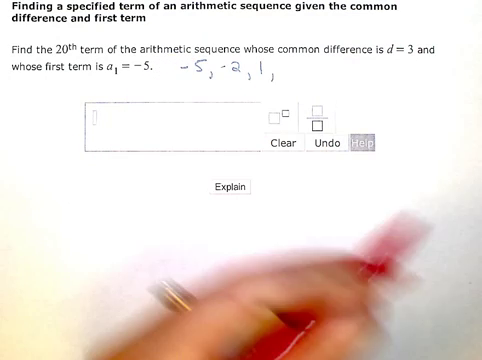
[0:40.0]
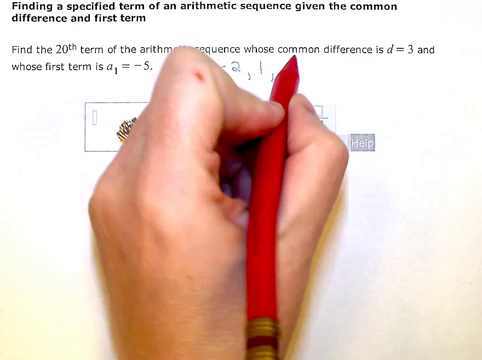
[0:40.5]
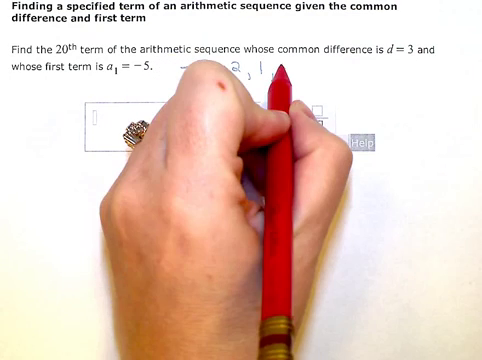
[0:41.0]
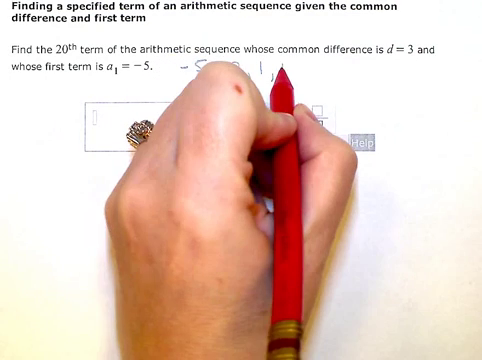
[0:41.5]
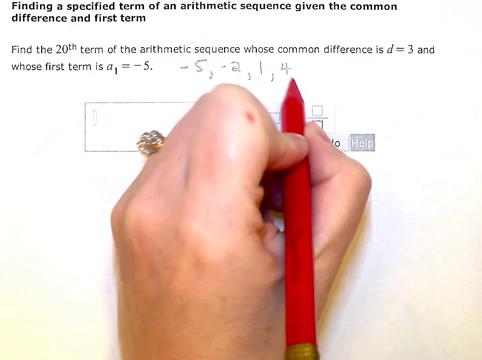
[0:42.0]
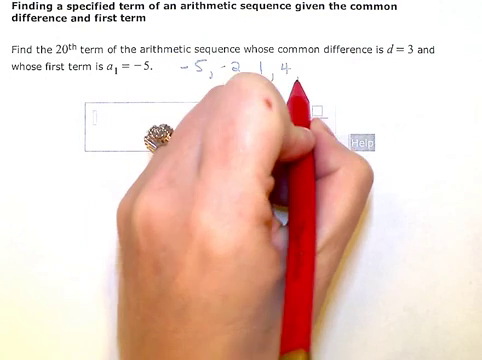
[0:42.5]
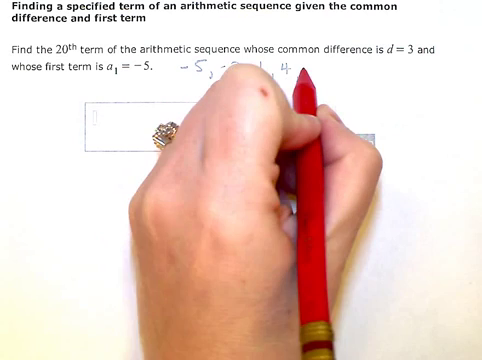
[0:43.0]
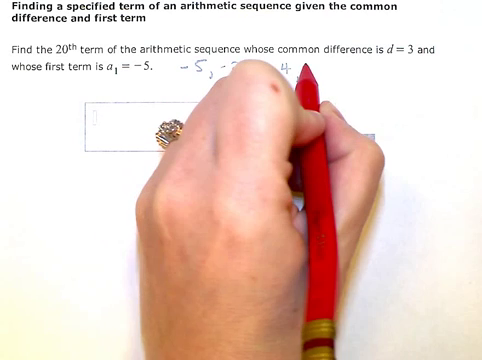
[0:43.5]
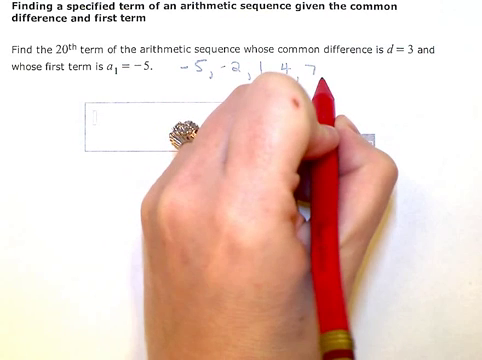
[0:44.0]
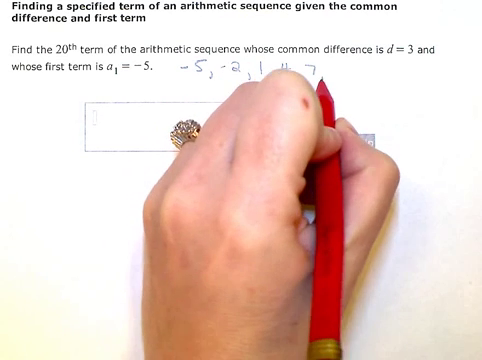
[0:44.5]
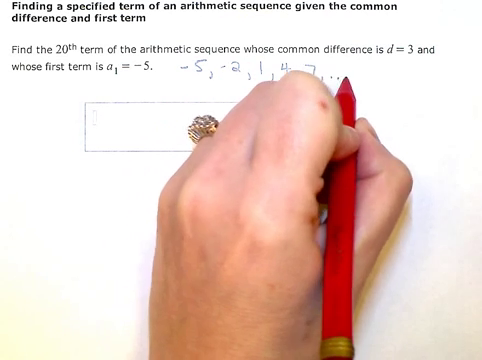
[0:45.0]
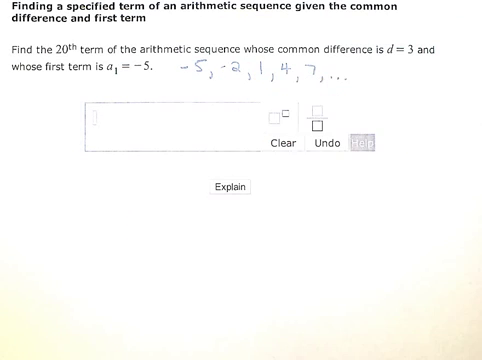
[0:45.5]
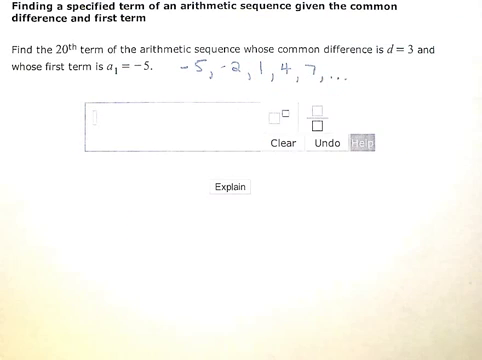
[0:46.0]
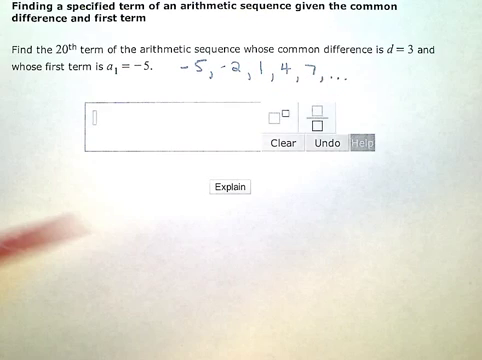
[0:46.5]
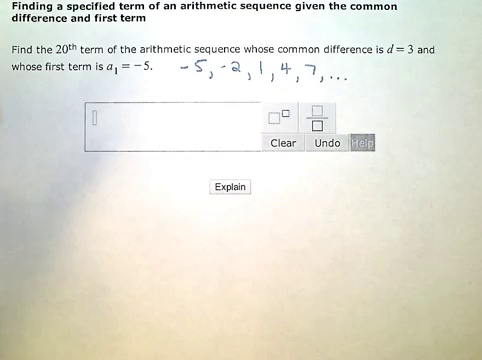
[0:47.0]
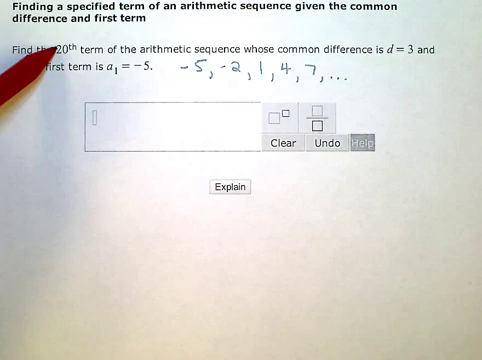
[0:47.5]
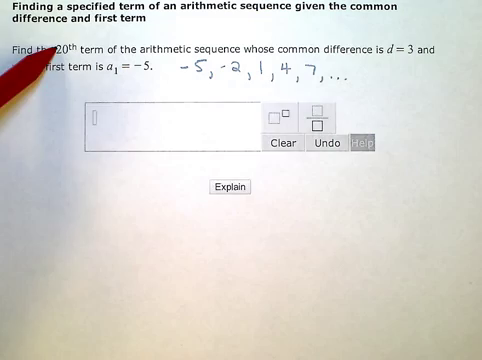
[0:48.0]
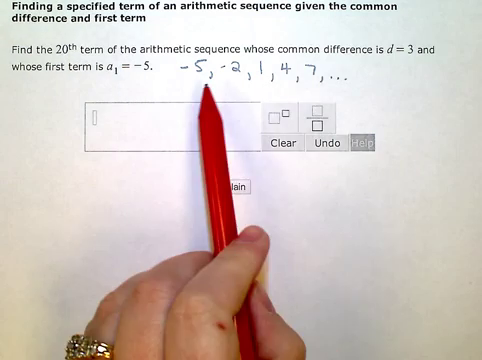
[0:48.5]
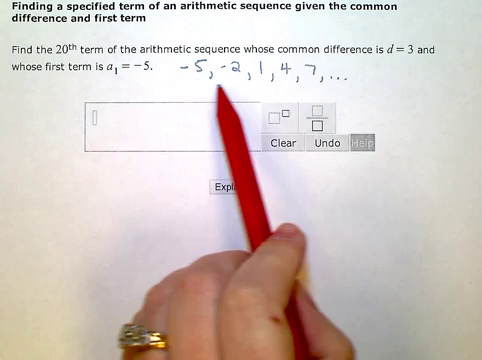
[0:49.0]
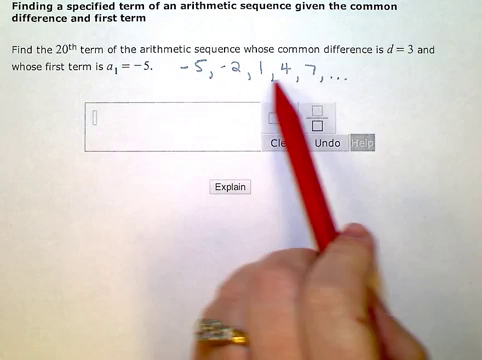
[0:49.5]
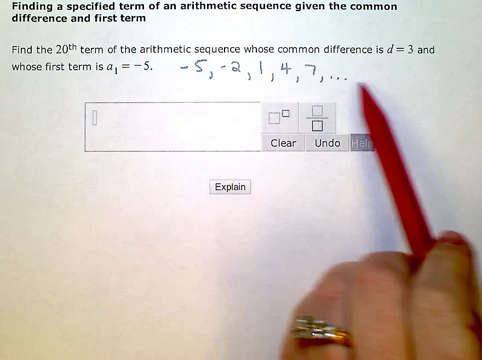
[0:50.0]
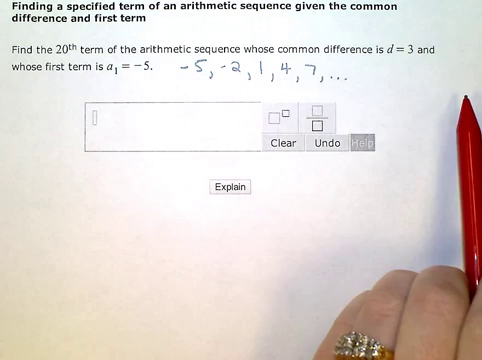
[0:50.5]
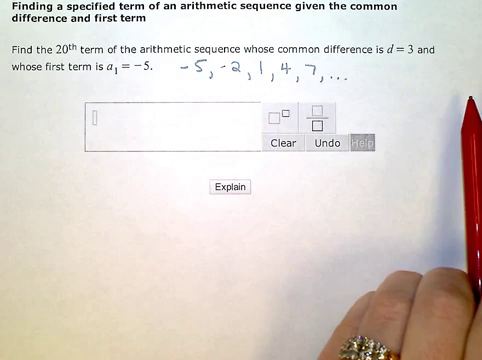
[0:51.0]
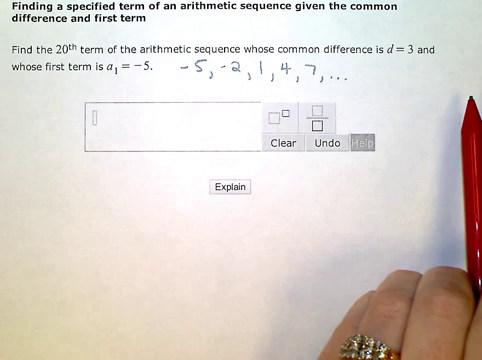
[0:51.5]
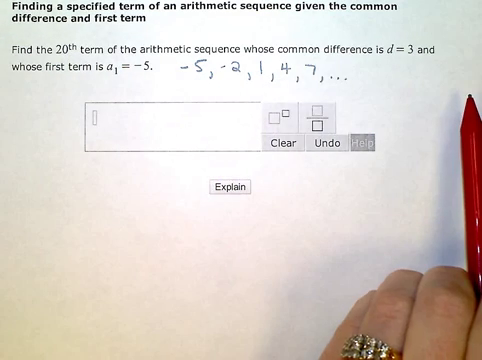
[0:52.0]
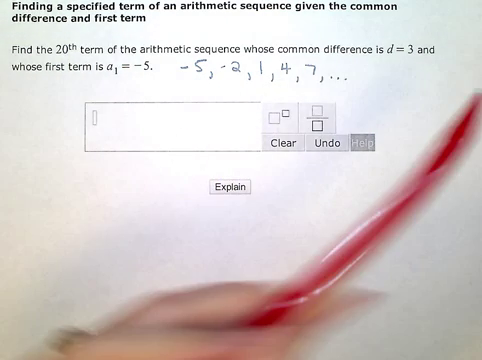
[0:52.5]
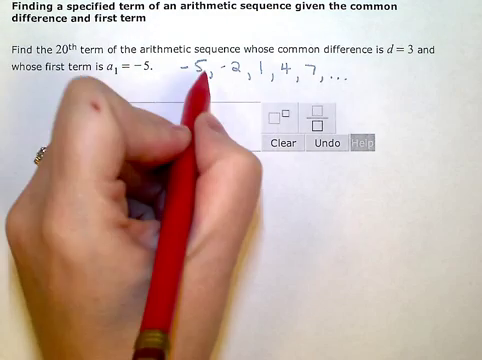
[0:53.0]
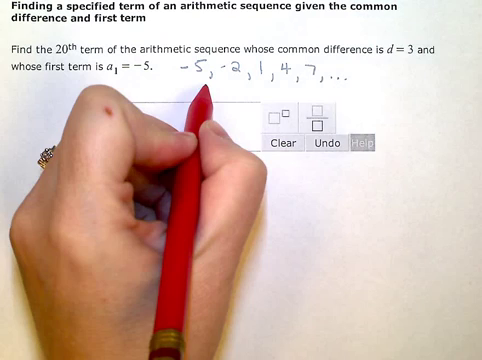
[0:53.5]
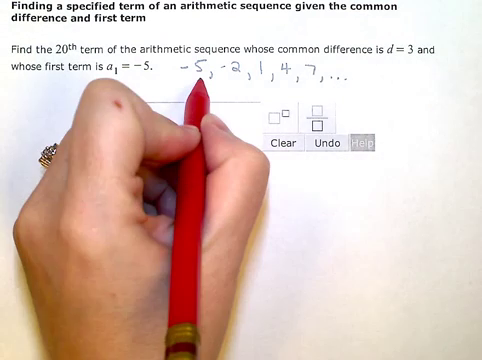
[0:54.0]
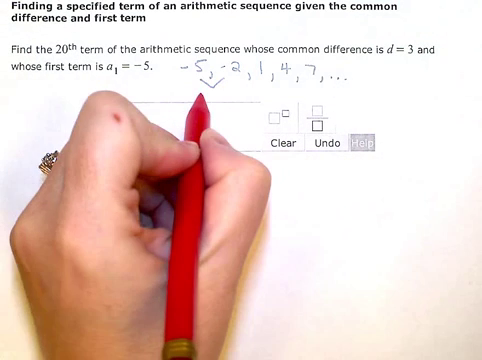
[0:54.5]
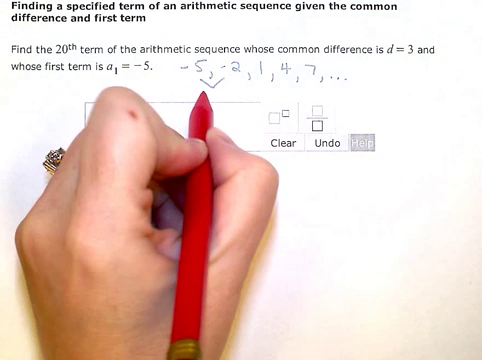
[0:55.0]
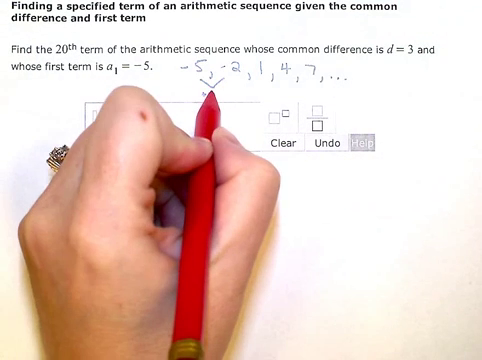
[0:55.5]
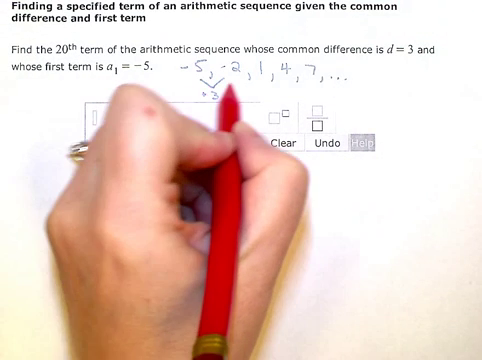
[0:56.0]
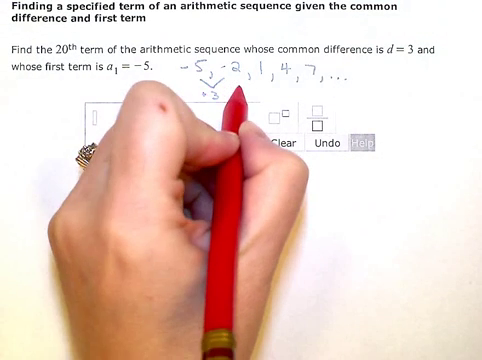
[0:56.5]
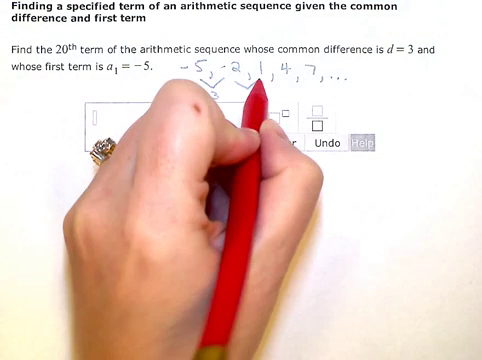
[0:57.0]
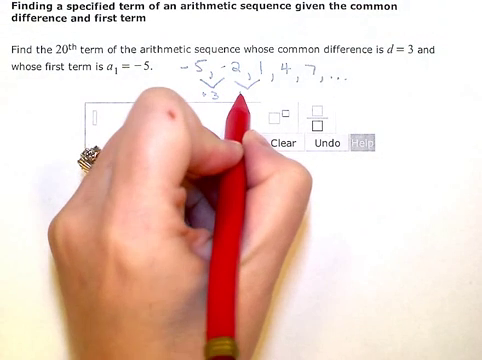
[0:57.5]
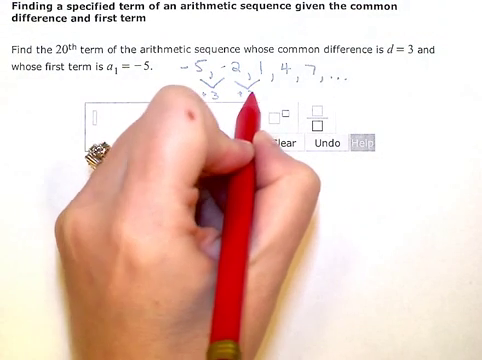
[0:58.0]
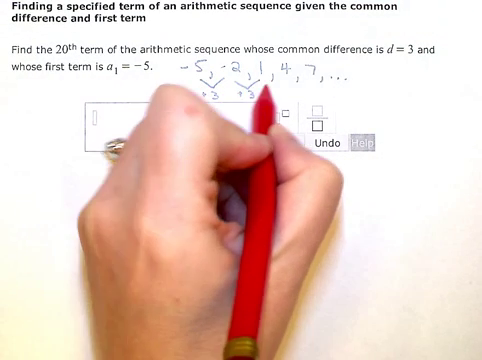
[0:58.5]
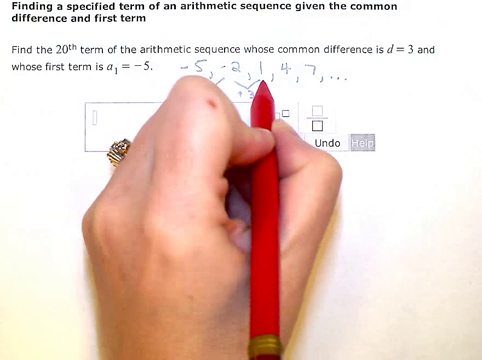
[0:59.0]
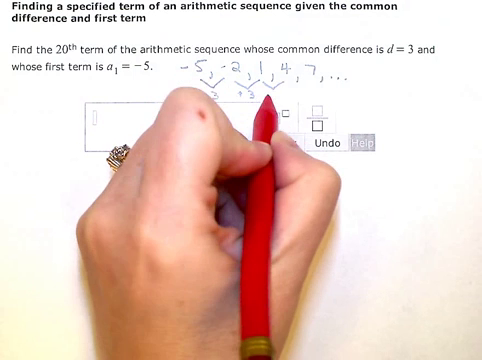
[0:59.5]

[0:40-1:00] The heading about finding a specified term of an arithmetic sequence and the question about the twentieth term with d = 3 and first term -5 are on screen. The person has already written -5, -2, 1 and now adds 4, then ", 7 ...". Under -5 and -2 they draw an upside-down V and write a 3 there, and they do the same between -2 and 1 and between 1 and 4, putting +3 under each pair.